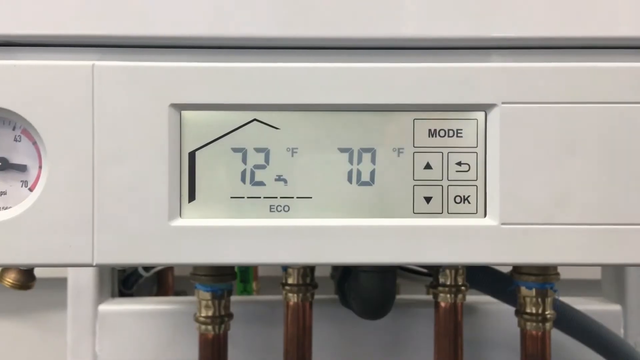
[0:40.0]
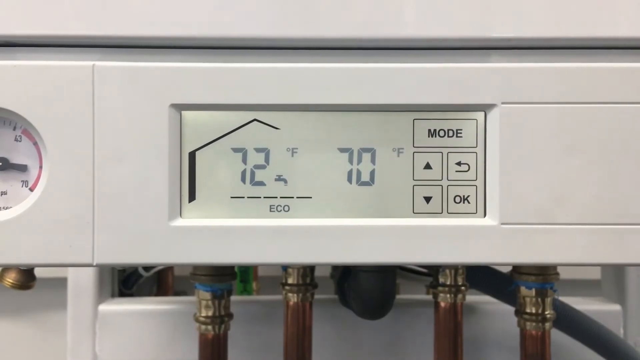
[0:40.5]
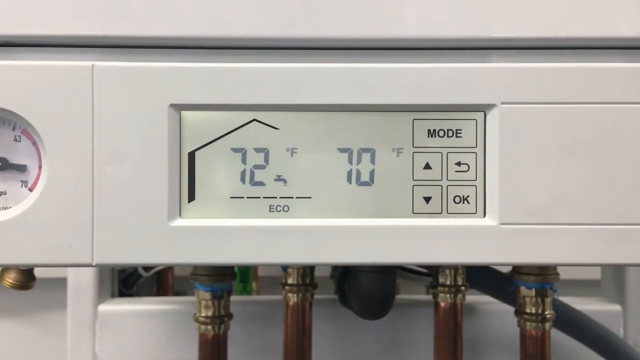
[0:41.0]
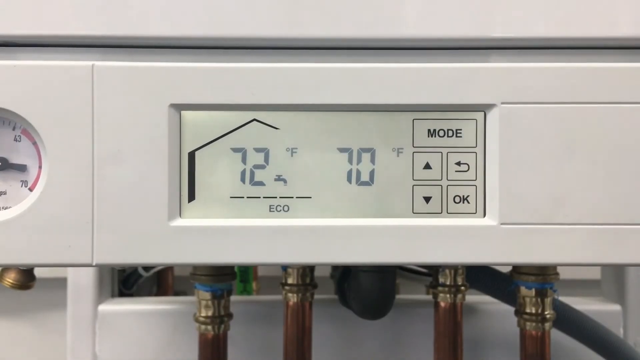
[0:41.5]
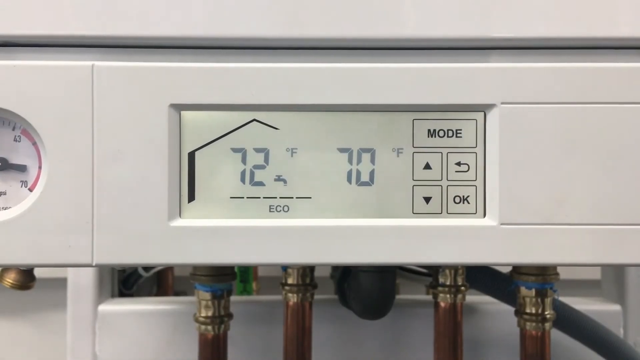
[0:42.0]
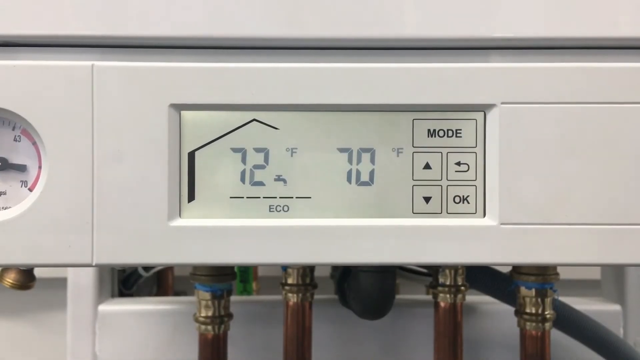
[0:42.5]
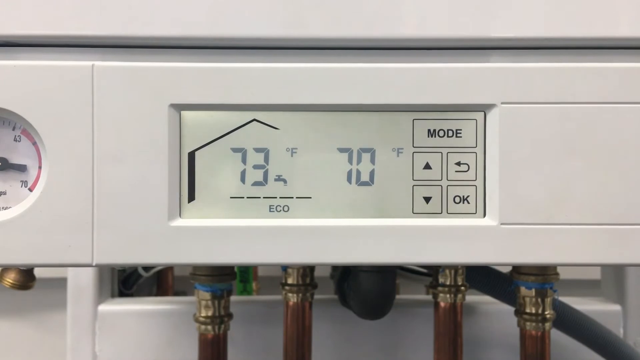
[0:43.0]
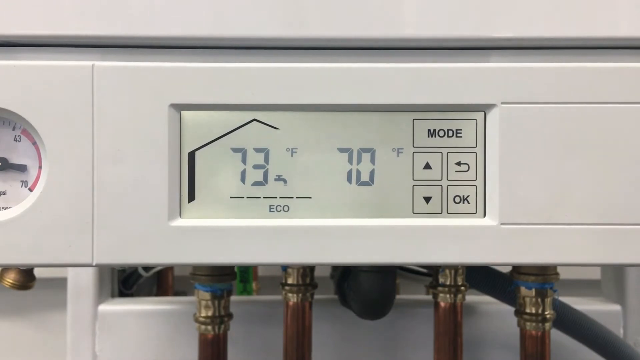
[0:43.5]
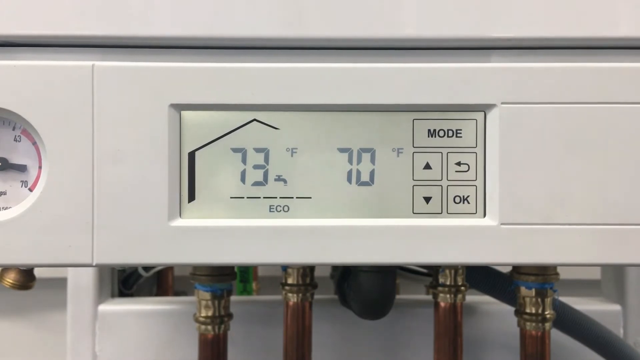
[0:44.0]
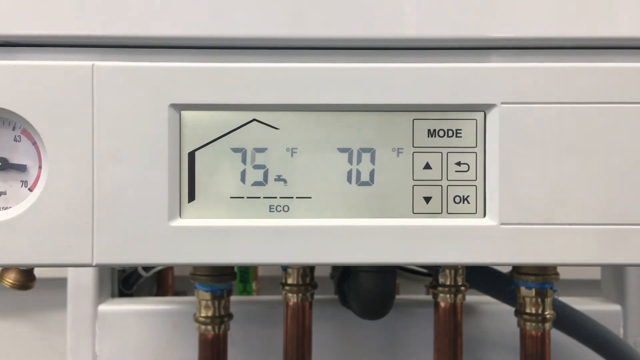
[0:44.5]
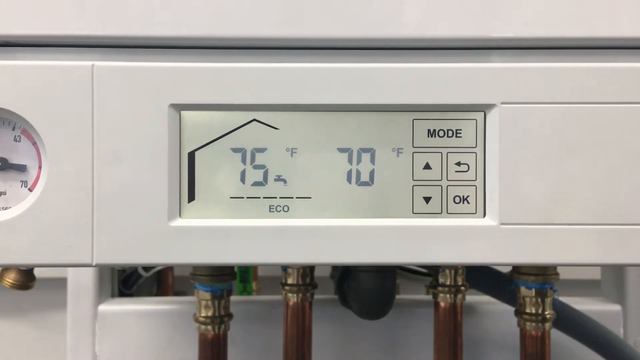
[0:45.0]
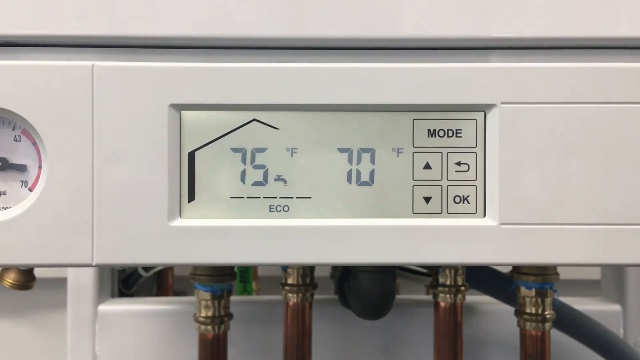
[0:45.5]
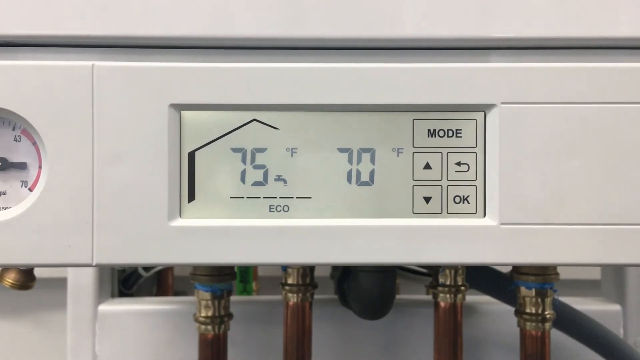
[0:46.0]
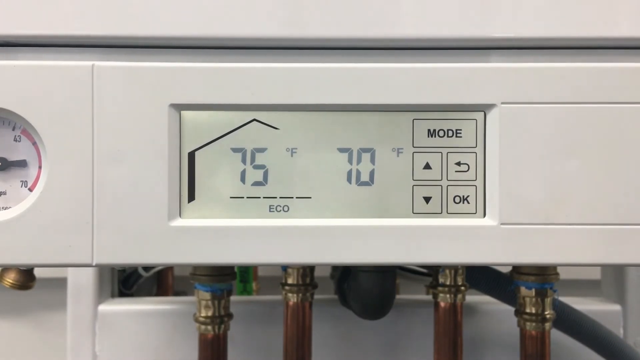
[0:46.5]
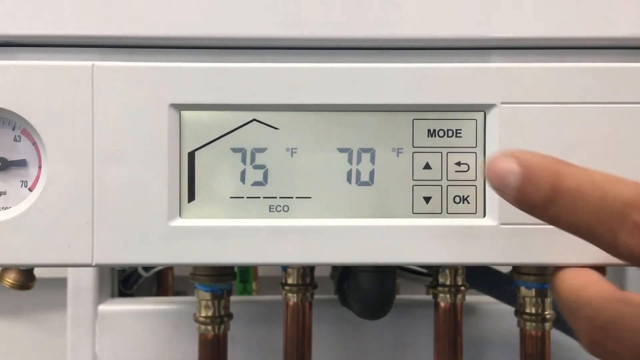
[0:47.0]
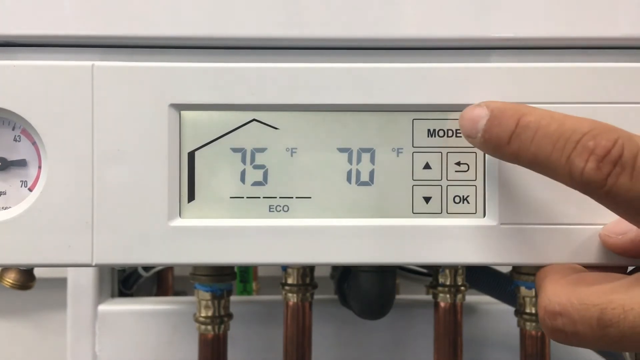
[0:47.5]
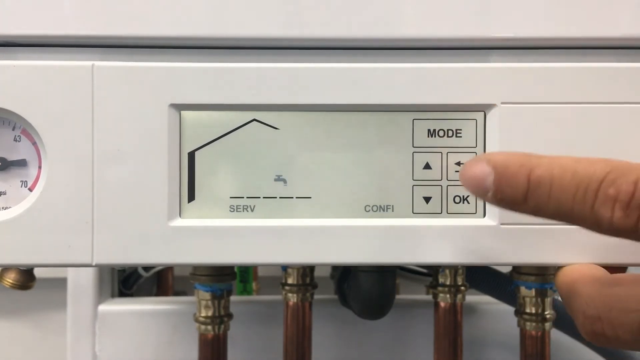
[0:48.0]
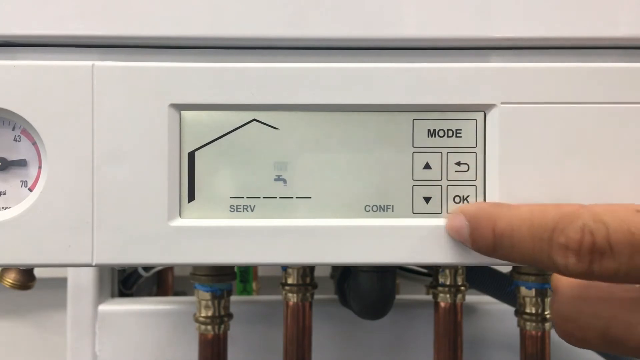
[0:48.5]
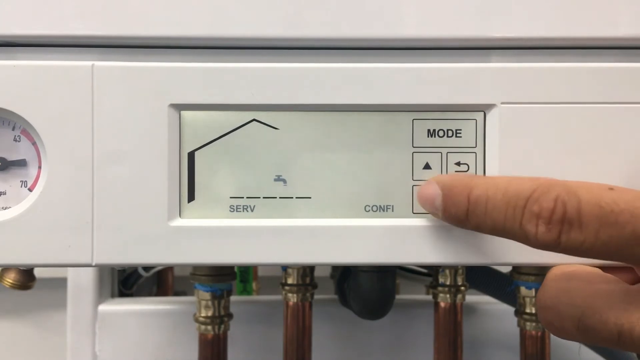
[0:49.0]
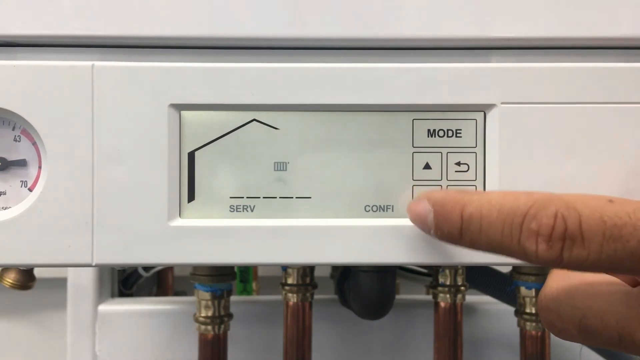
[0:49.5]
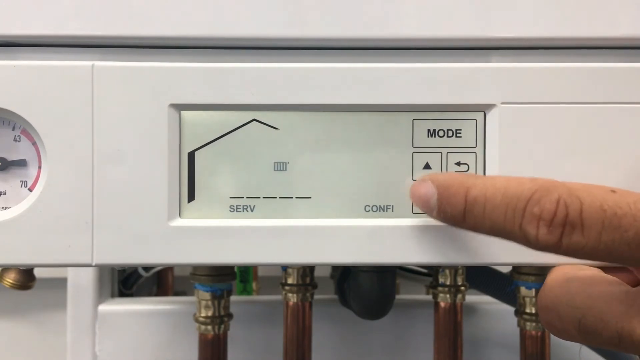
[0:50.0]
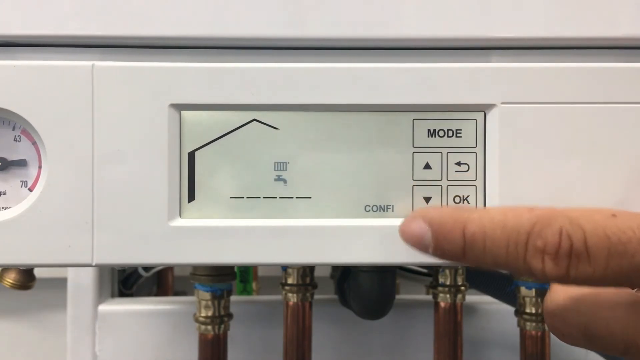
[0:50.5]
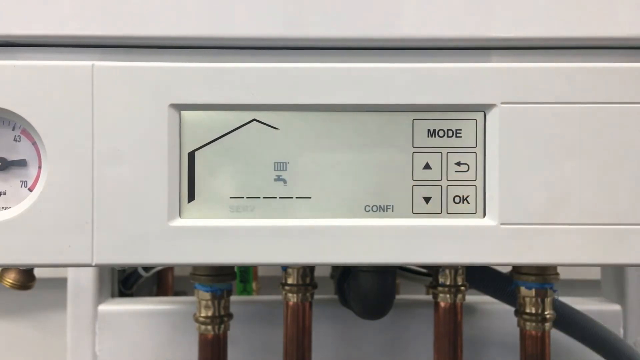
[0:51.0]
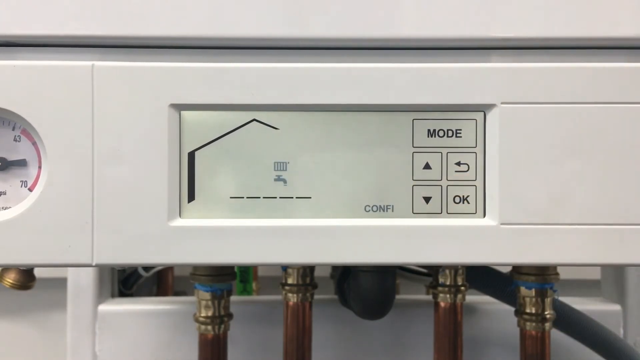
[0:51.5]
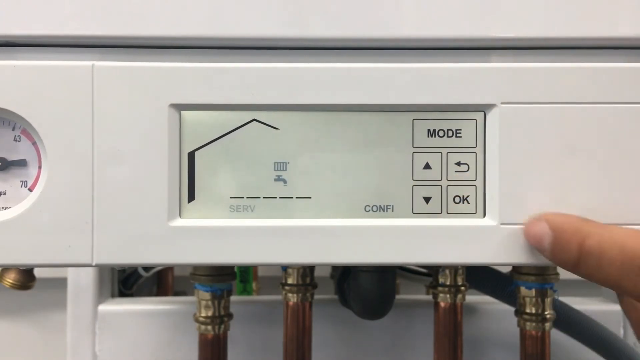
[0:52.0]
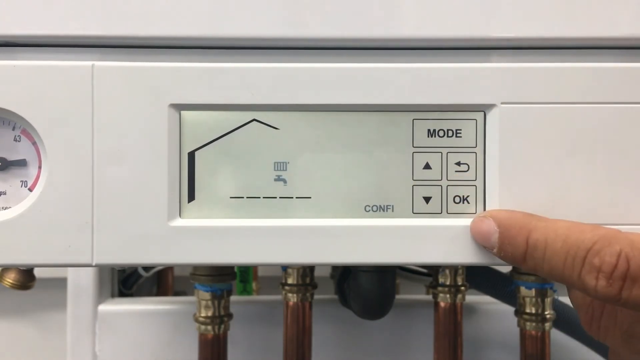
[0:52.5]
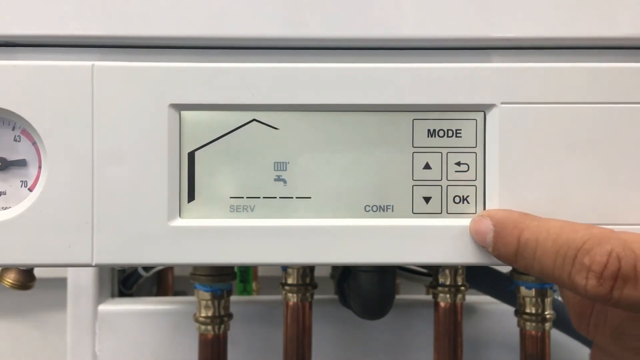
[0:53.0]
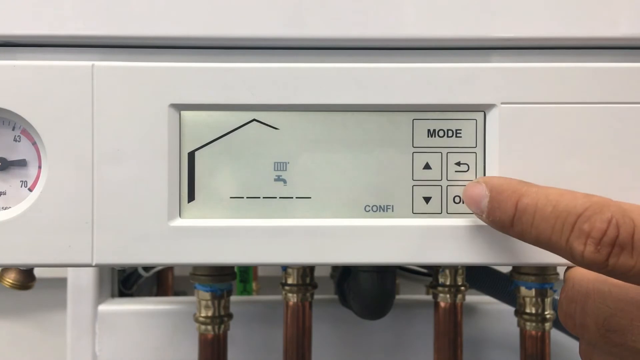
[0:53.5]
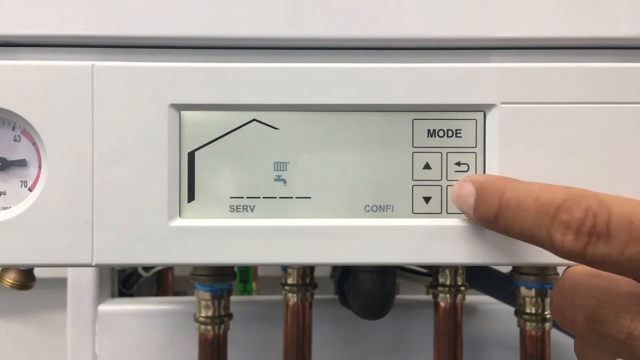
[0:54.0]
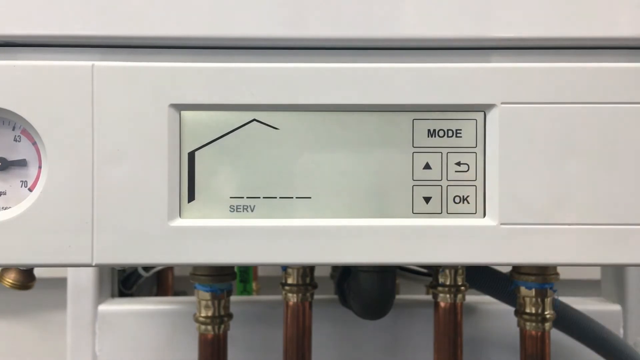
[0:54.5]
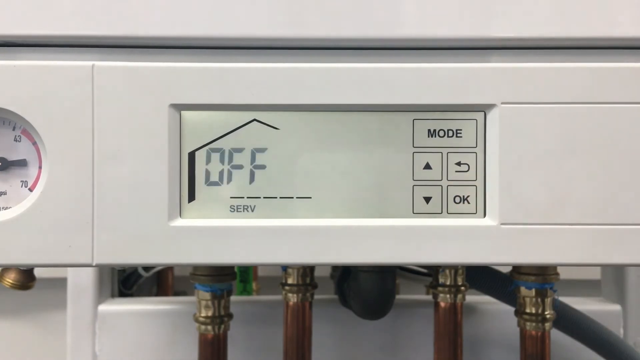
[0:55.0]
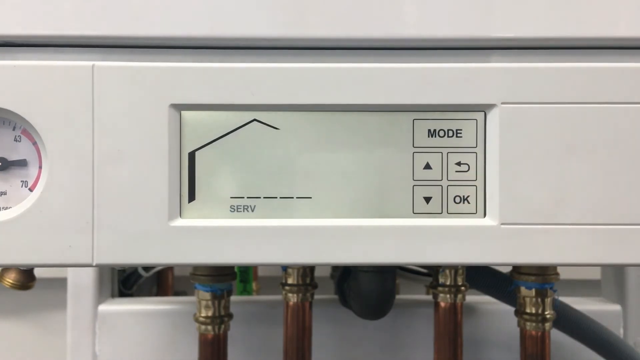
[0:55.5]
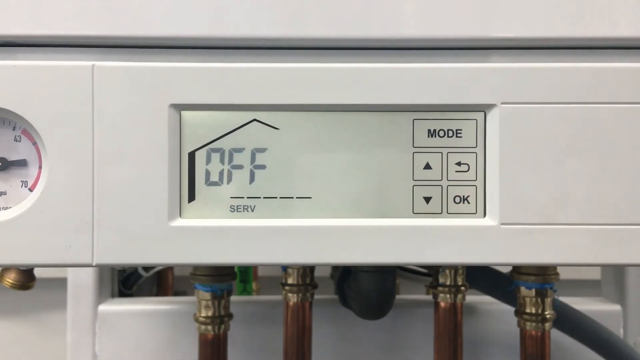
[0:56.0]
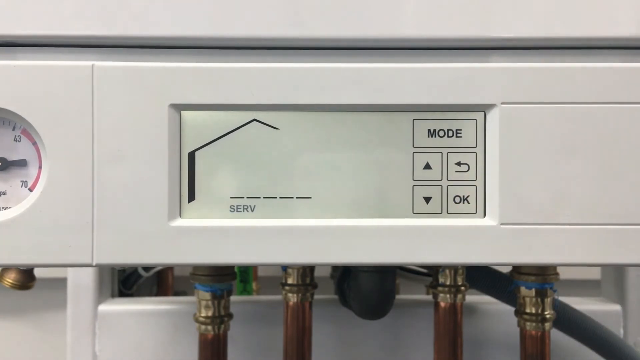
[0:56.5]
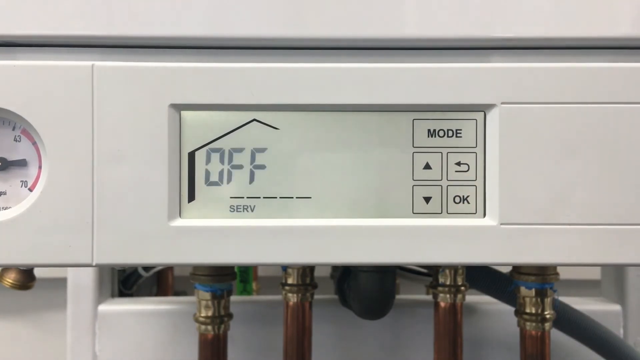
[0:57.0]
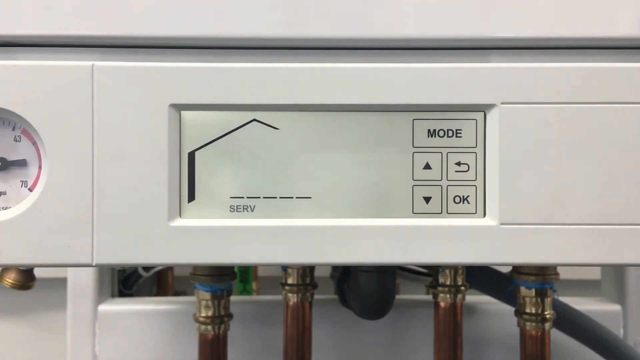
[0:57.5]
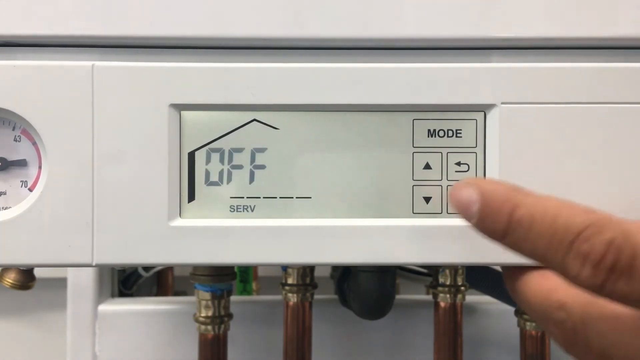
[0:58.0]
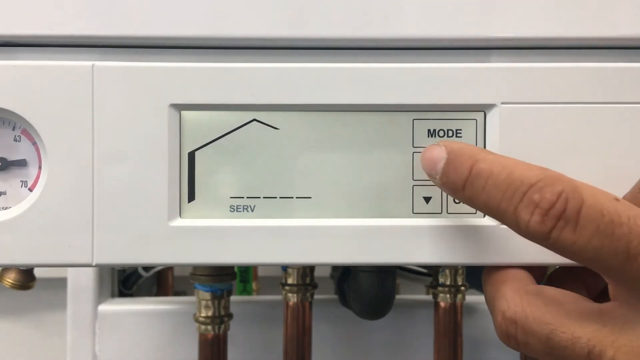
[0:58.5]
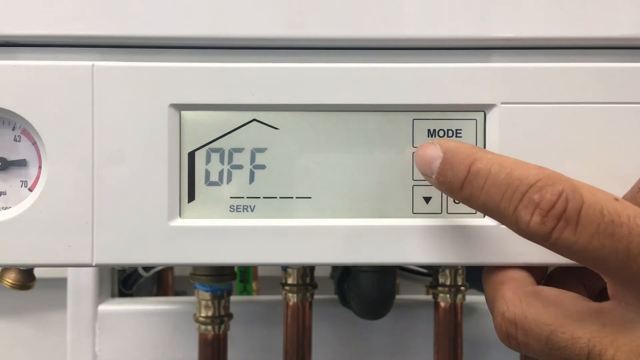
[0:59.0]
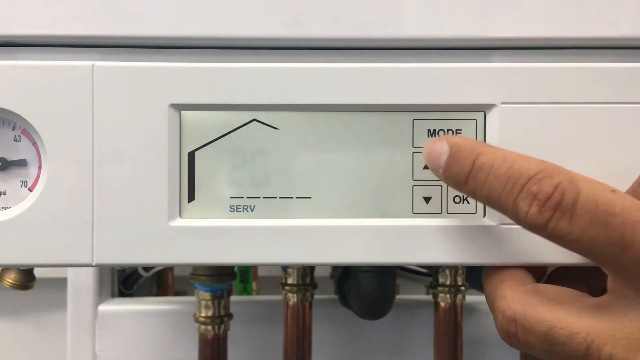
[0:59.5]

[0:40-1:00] The boiler display reads 72 degrees Fahrenheit inside the house, with "Eco" shown. The control has mode, arrow up, arrow down, OK and return keys. The temperature goes to 73, then 75 degrees Fahrenheit, and the faucet symbol disappears. Mode is pressed, the faucet reappears, and the words "self" and "comfy" appear. The down arrow is used, the display shows "self" and then "off," and OK is pressed. With the up arrow the temperature shows 72, then 73 degrees Fahrenheit. Pressing OK turns it off: no temperature and no faucet are shown, only the word "CONFIG." Only the man's hand is visible.